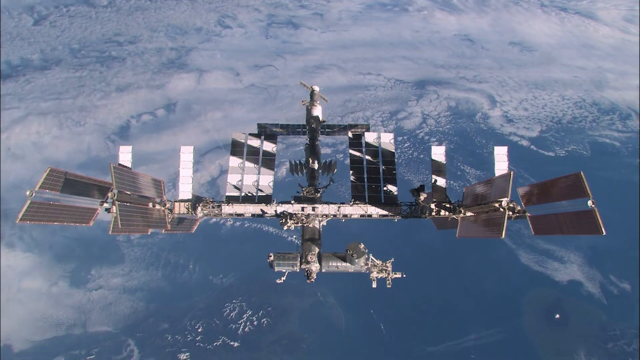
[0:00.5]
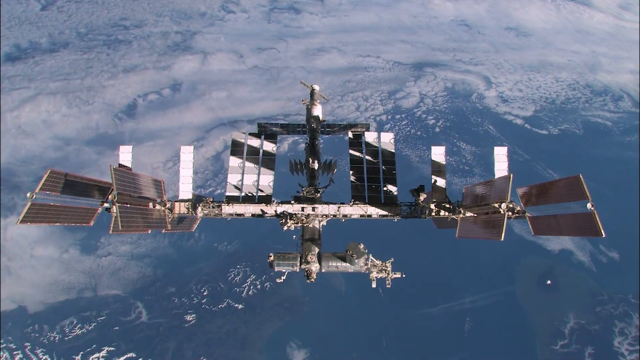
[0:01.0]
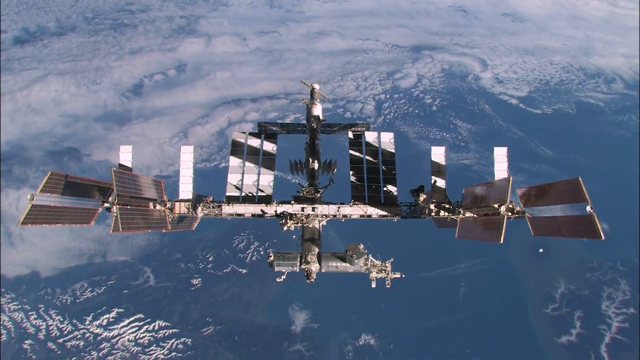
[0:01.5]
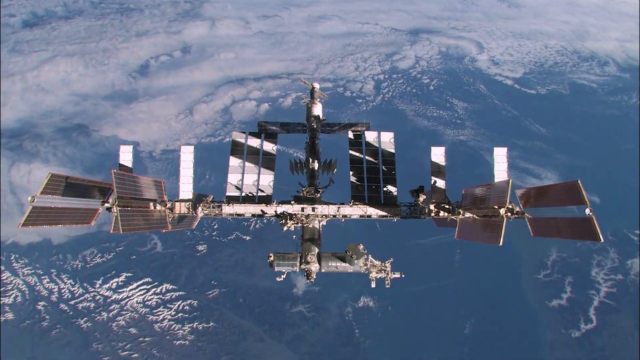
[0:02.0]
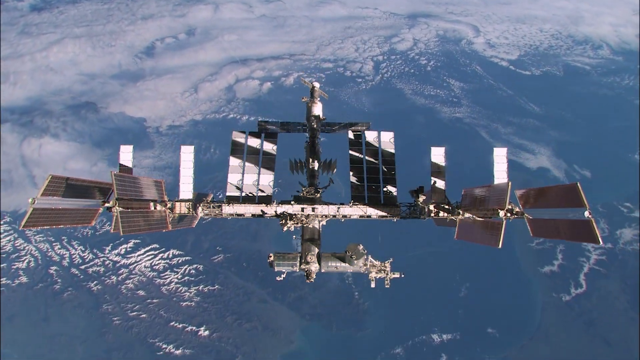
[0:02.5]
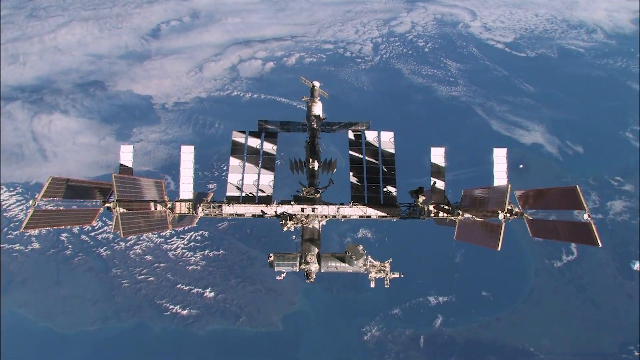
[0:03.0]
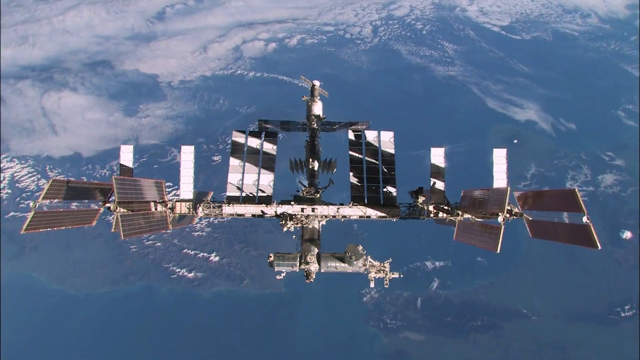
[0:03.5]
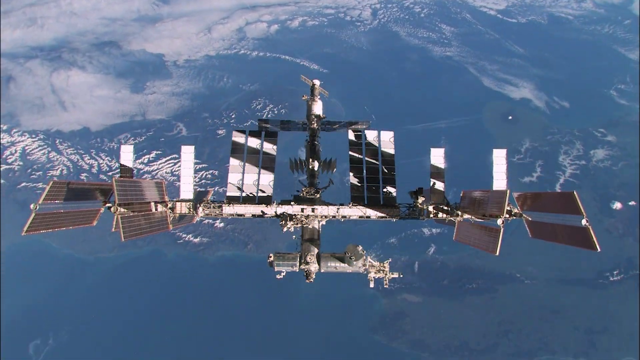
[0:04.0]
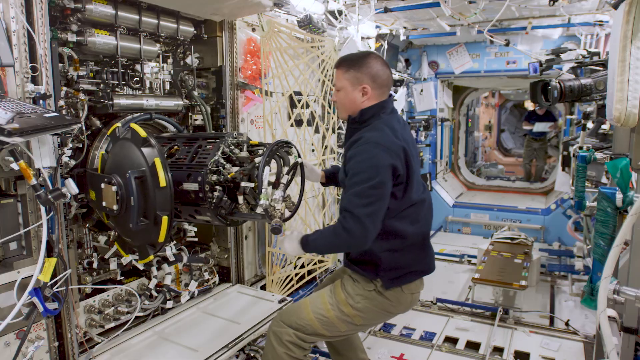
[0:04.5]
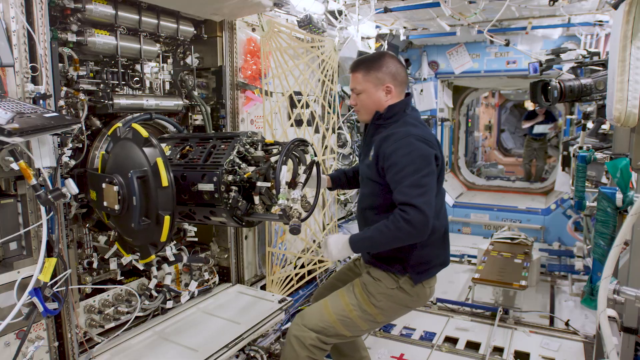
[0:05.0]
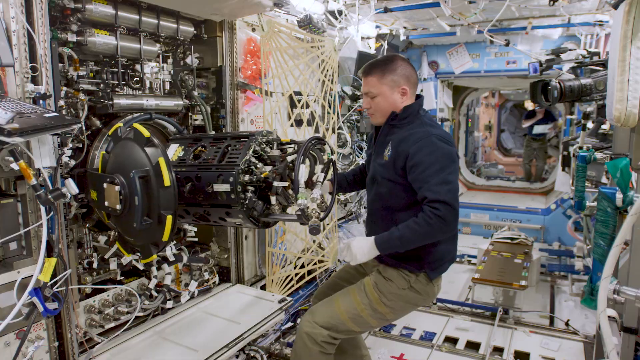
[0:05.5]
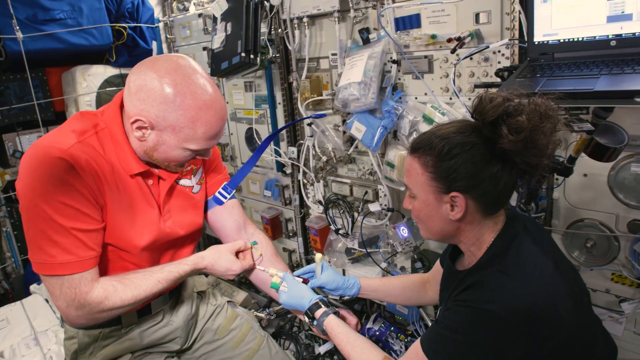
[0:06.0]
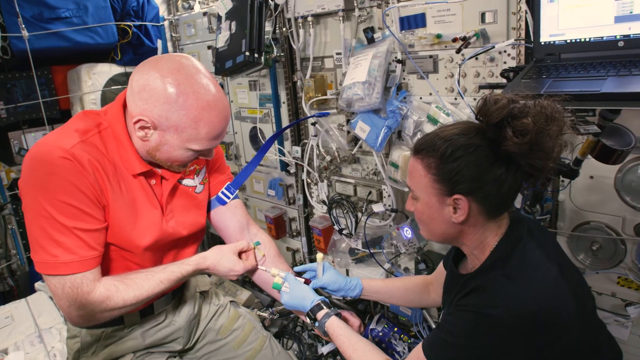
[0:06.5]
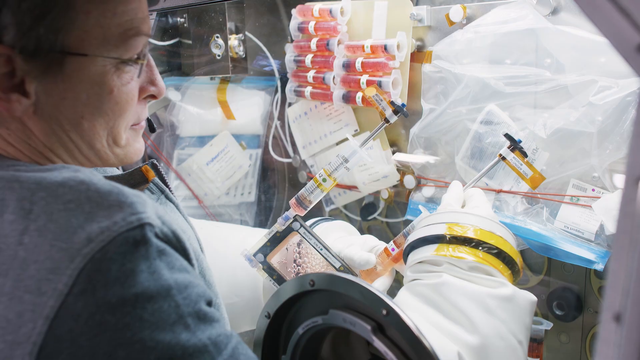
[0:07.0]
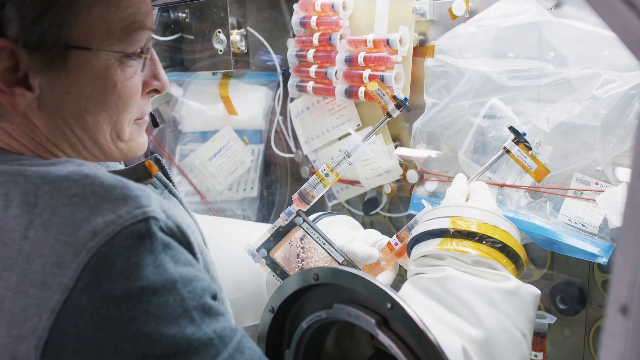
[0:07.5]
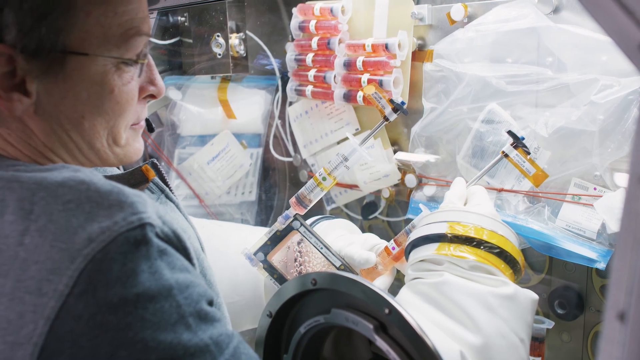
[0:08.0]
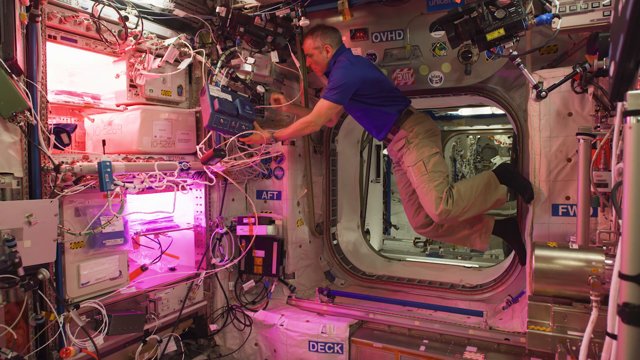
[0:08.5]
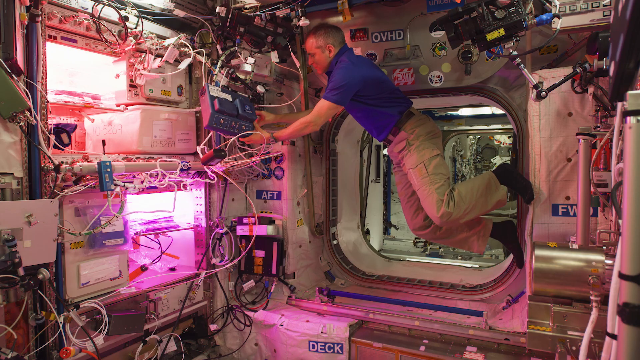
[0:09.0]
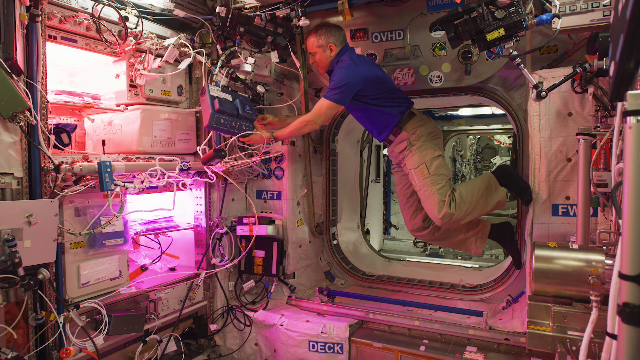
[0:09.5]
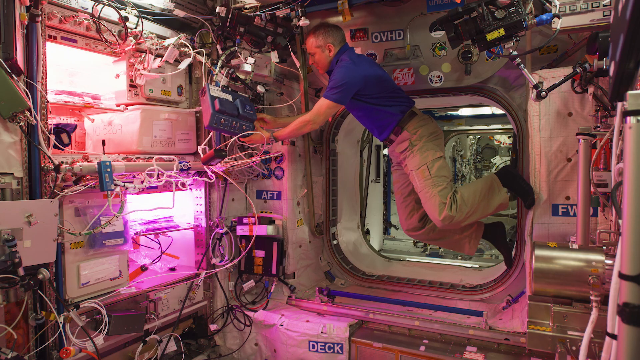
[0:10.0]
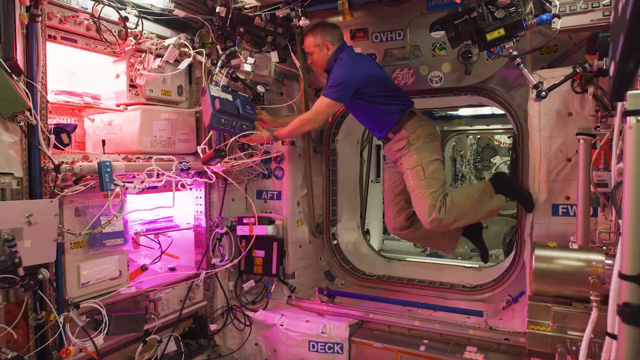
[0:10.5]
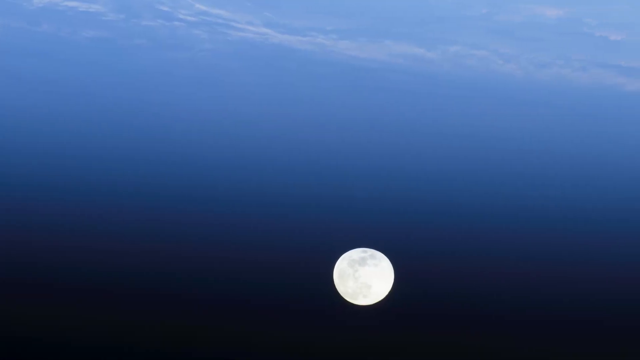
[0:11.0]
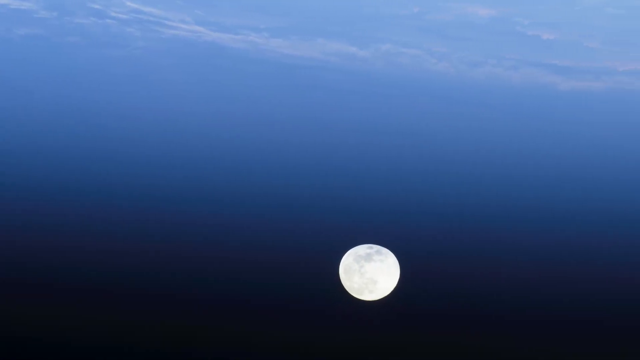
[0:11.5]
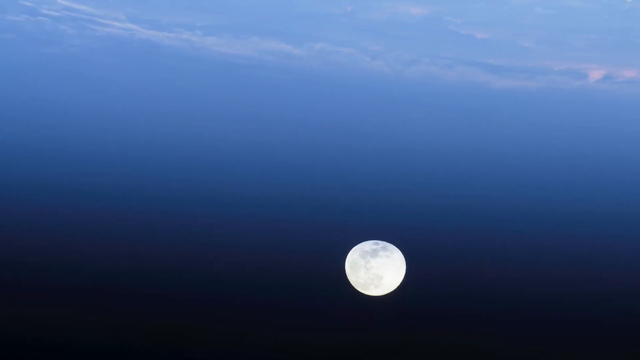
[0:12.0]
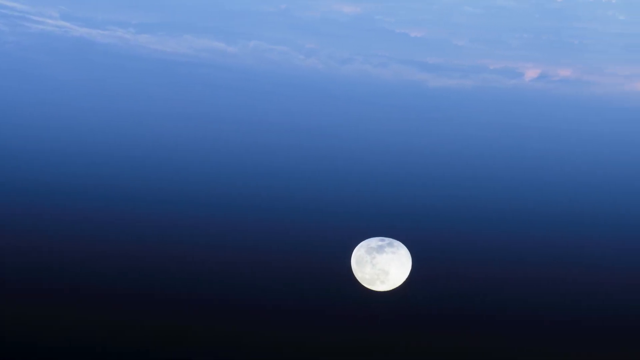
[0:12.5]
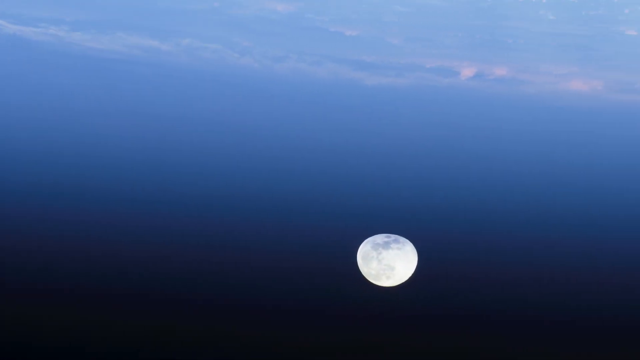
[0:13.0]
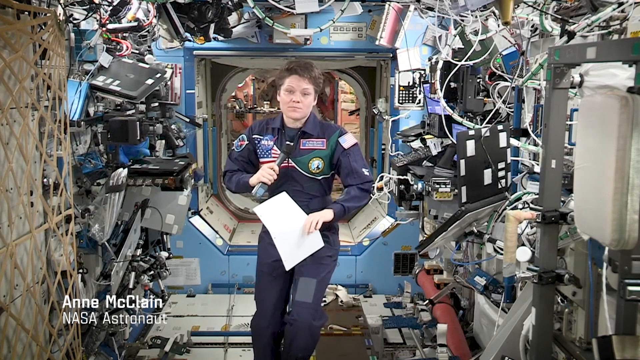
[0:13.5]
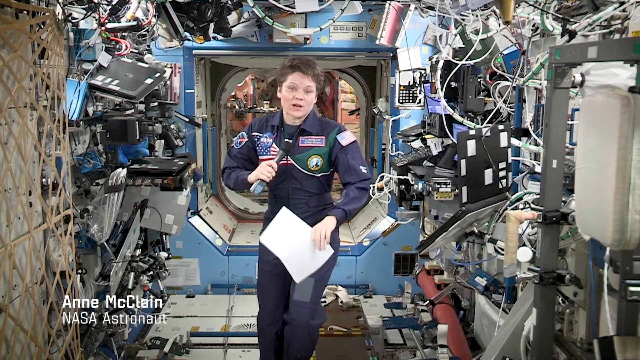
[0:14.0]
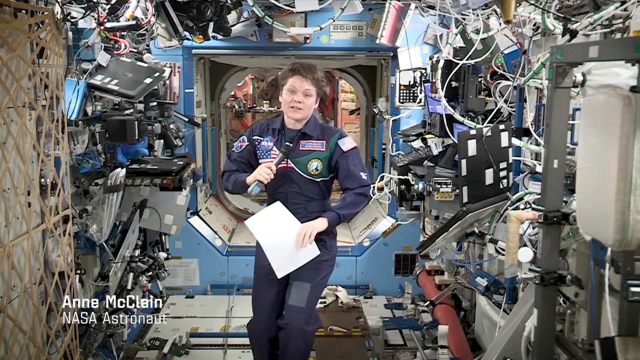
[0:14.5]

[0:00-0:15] The video opens with a top-down view of the International Space Station from above, then the perspective shifts to the interior of the station, where various astronauts do experiments and tests while floating in low gravity. Next comes a pan of the moon, which goes off into the distance in the sky, before the video returns to a young woman talking toward the camera while floating in the space station. The subtitles apparently read "Anne McClain NASA astronaut" as her name. As the footage blinks through, a piece of equipment is pulled out, blood is drawn from another astronaut, a person works with some syringes, and a person floats while working with electrical equipment in zero-g.